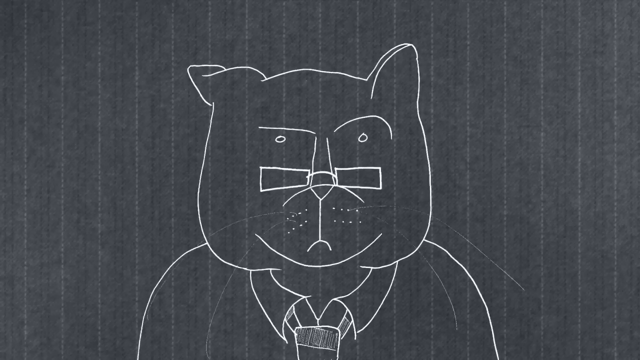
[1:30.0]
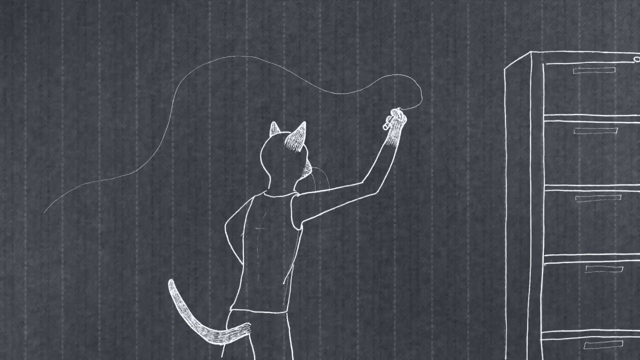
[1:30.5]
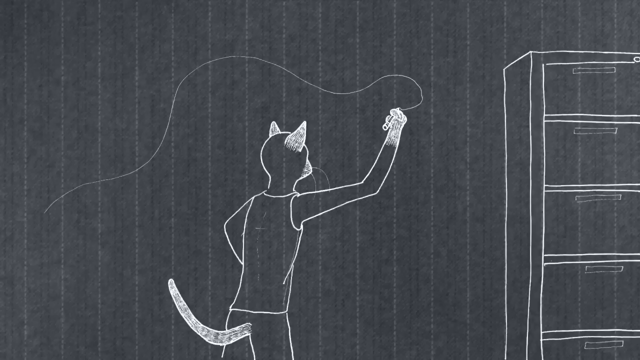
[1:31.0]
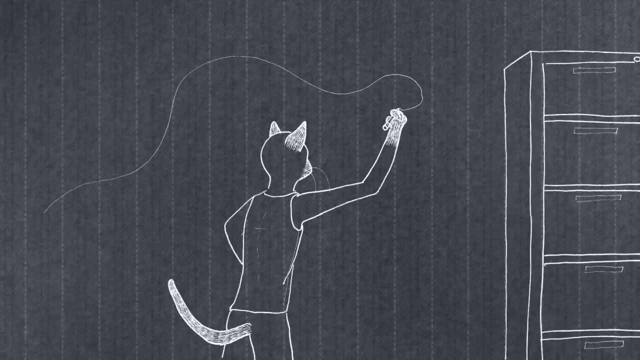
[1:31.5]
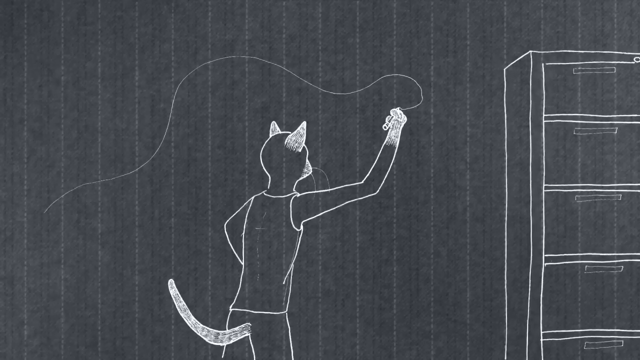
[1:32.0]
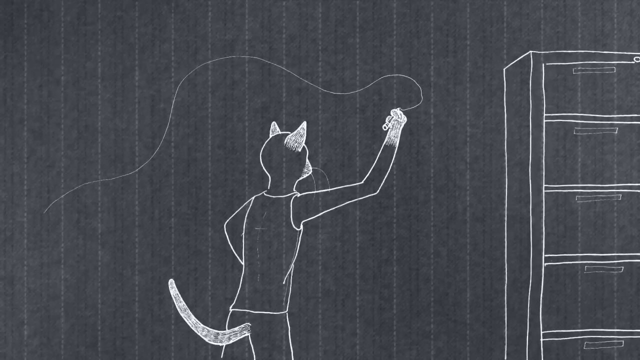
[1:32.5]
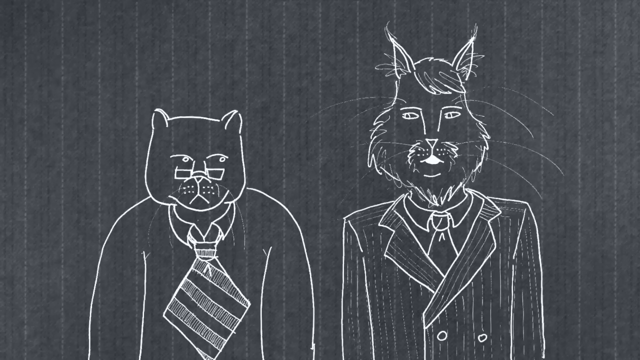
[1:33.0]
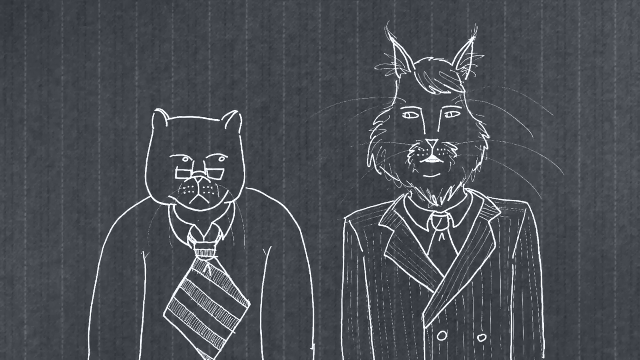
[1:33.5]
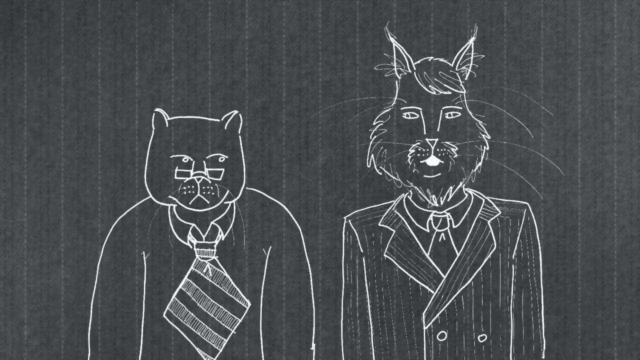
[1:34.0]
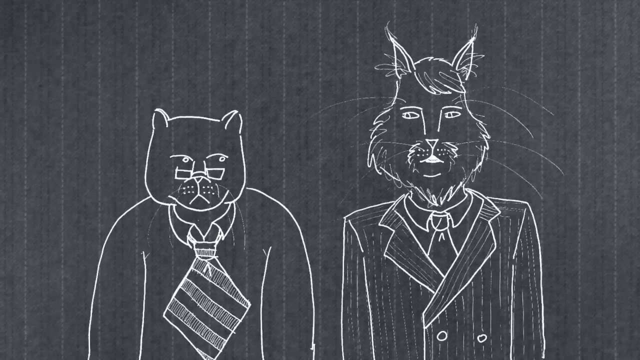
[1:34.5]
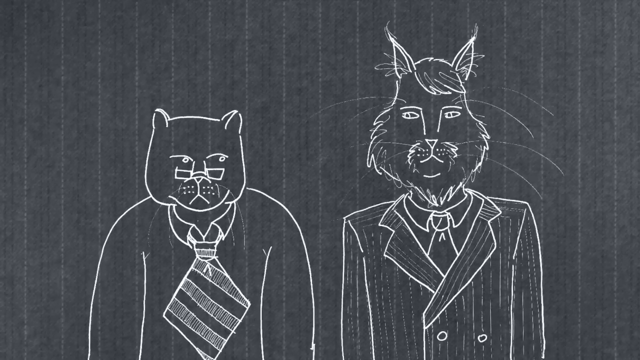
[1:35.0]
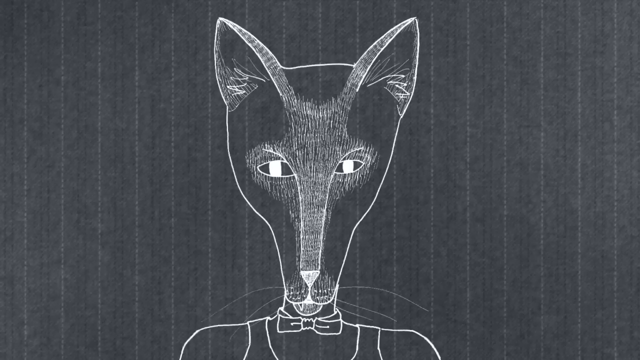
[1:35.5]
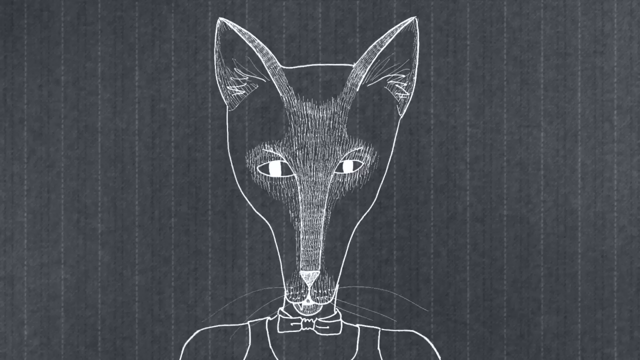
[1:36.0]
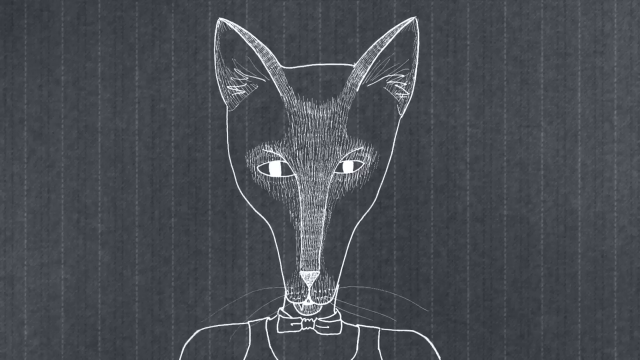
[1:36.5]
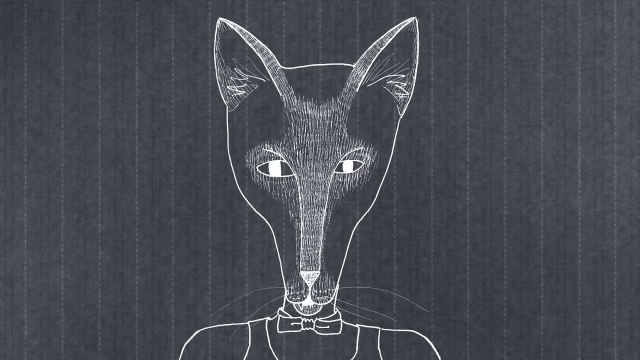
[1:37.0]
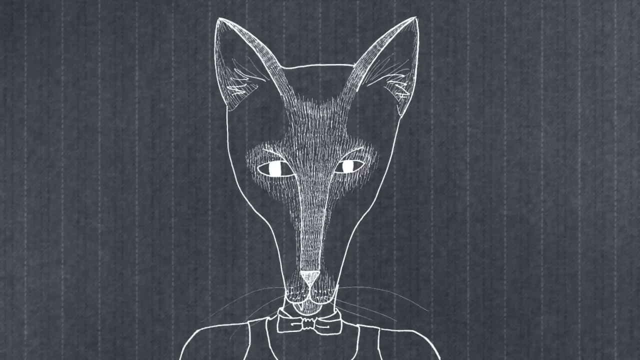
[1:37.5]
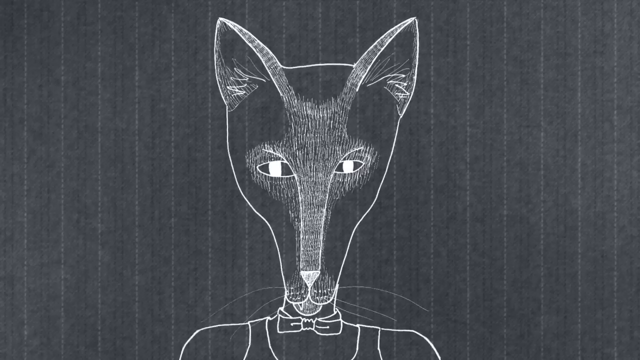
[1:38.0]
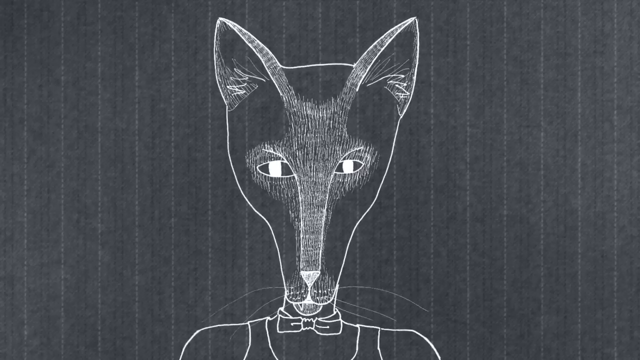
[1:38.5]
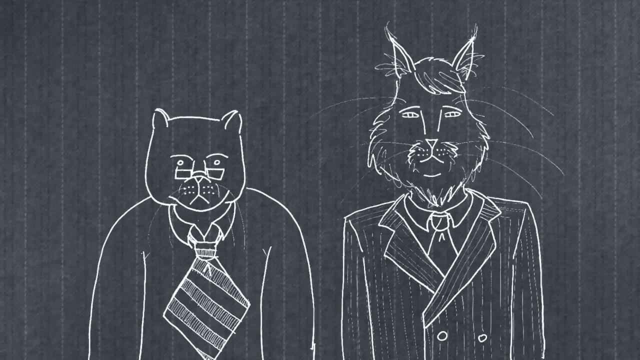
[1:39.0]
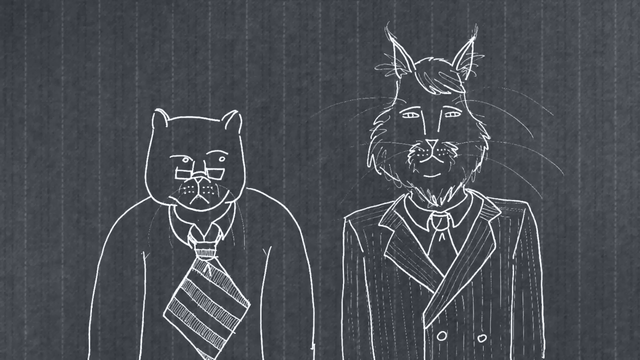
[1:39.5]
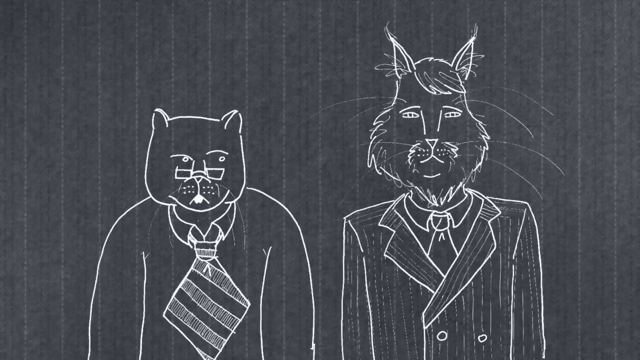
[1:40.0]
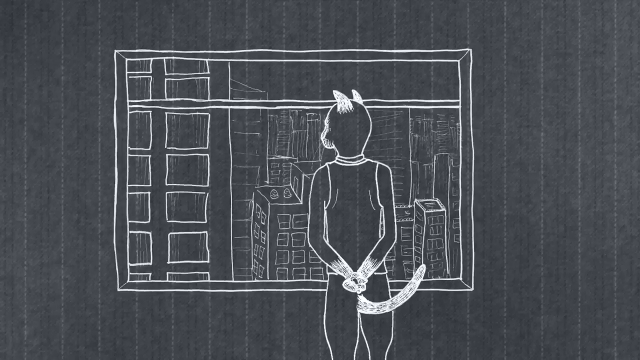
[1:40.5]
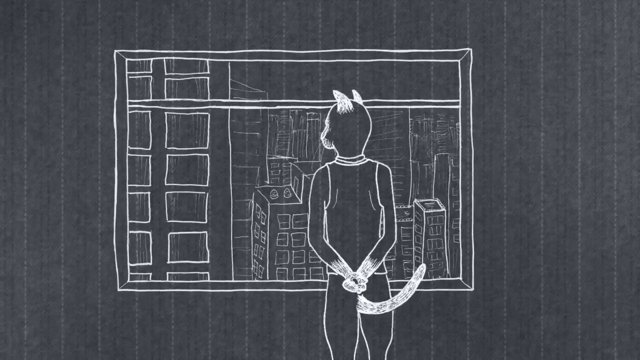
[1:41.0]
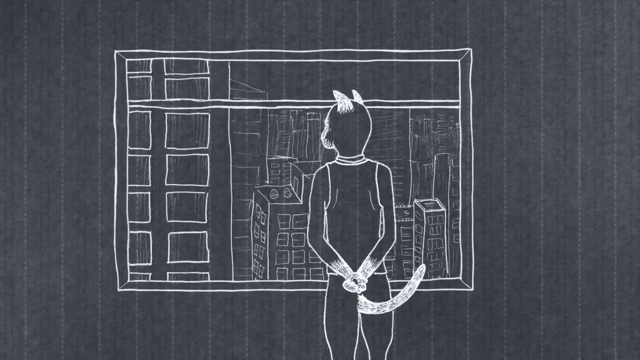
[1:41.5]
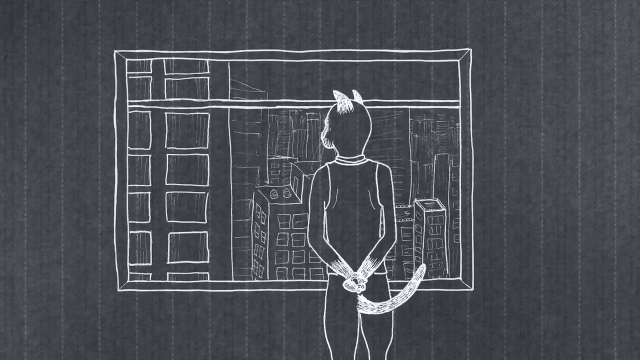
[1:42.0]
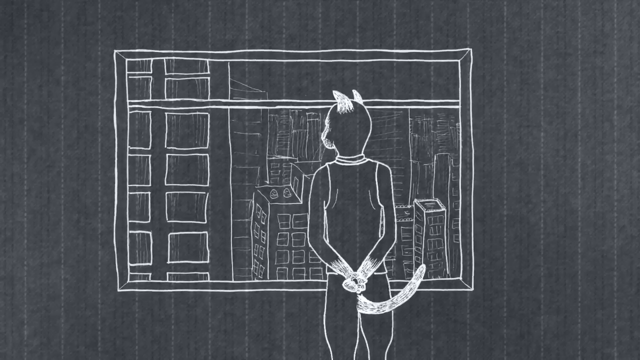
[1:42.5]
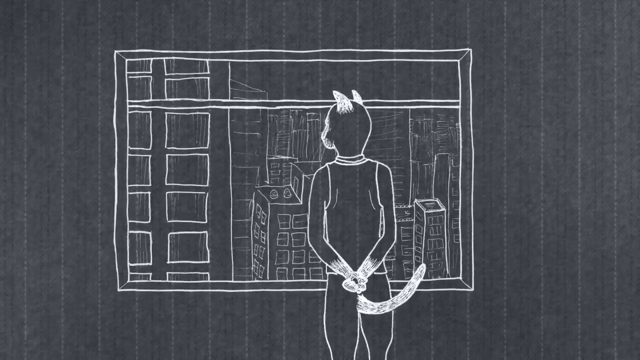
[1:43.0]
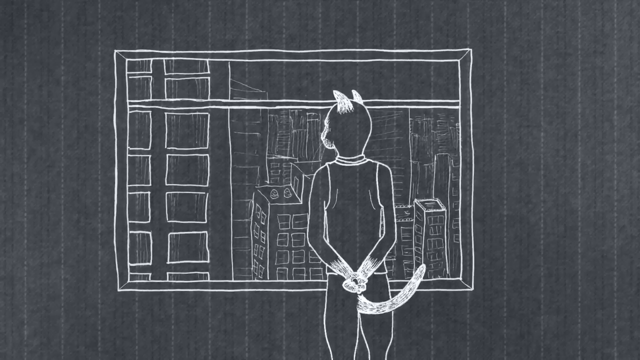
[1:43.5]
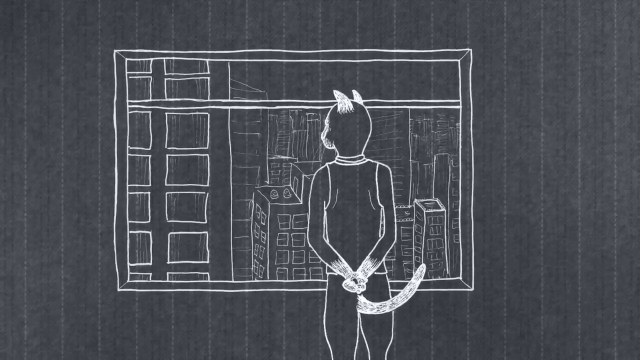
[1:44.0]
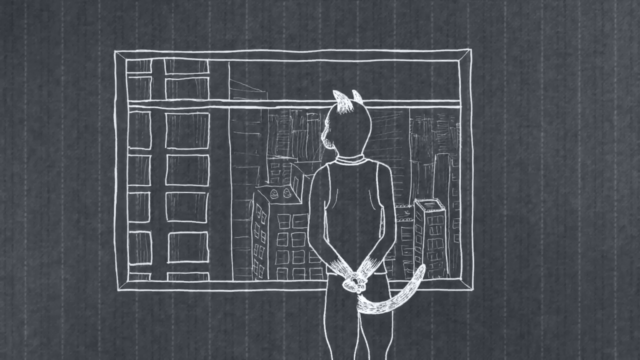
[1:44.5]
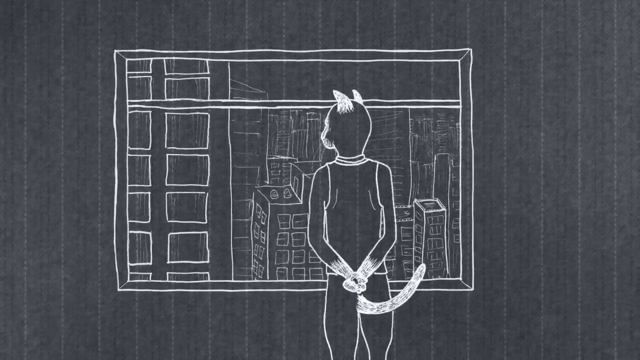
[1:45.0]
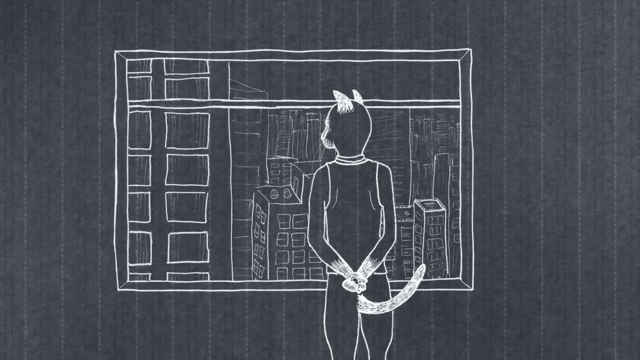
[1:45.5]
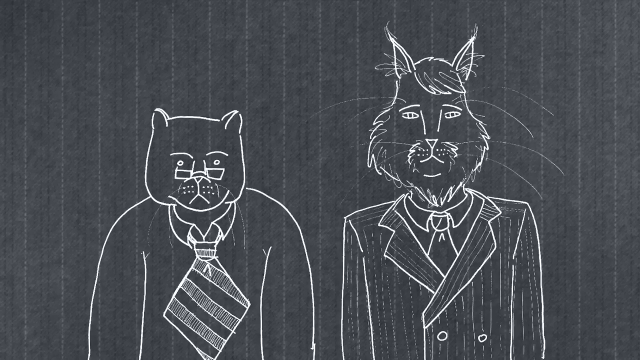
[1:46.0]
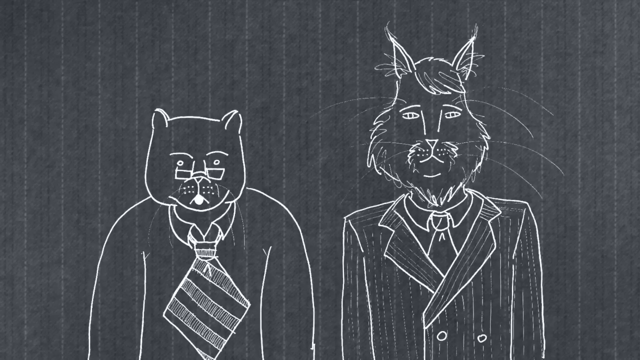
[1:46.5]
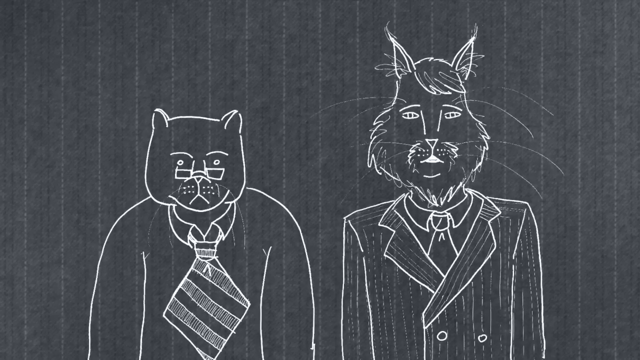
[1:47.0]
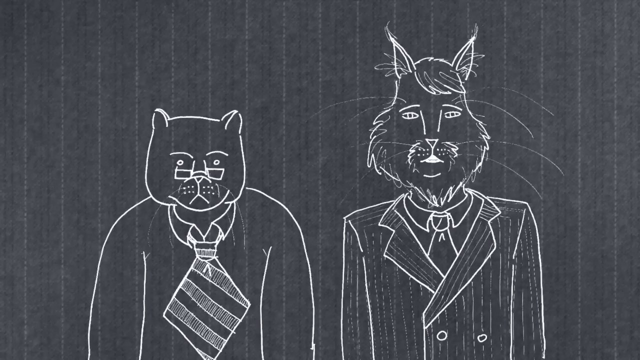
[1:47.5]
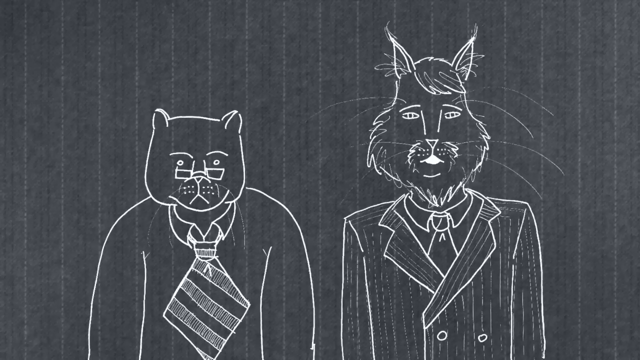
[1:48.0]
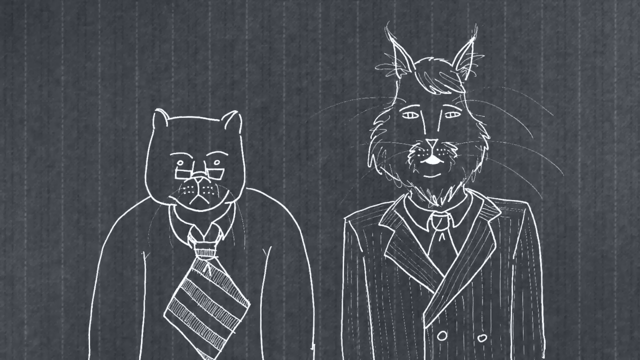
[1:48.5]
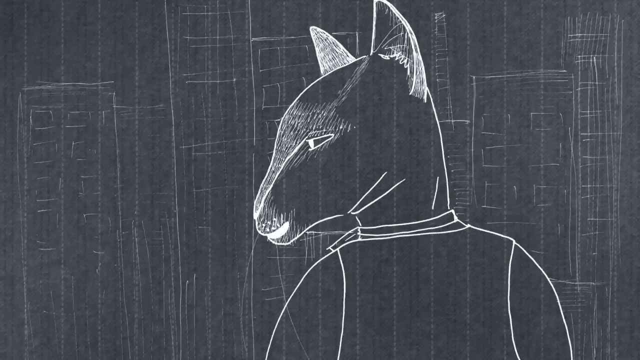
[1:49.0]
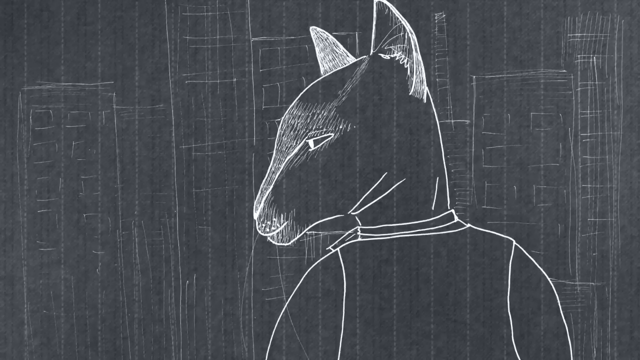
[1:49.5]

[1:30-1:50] The animation is drawn in white lines against a gray background with a texture and faint pattern that make it look almost like fabric. Three anthropomorphic cats with arms and legs stand on their back legs and wear human business clothes. Two of them are pictured side by side for most of the segment: one is tall with tall pointy ears and wears a jacket, shirt and tie; the other is shorter, with a square head and short ears, and wears a shirt with a very wide tie. A very thin cat with a long narrow face wears a vest with a bow tie and is shown doing different things in an office setting: drawing on a wall next to a file cabinet, standing by a window with his hands behind his back looking out at buildings, and looking over his shoulder in front of the window, talking to the other cats behind him.